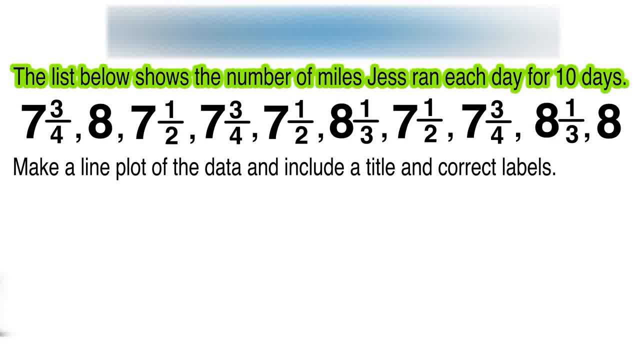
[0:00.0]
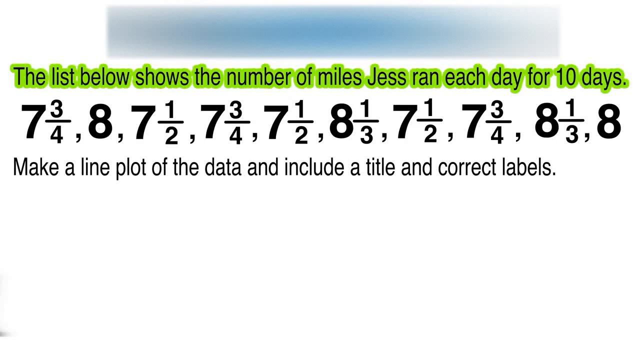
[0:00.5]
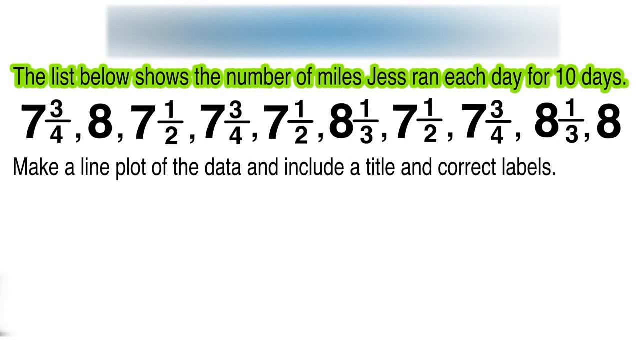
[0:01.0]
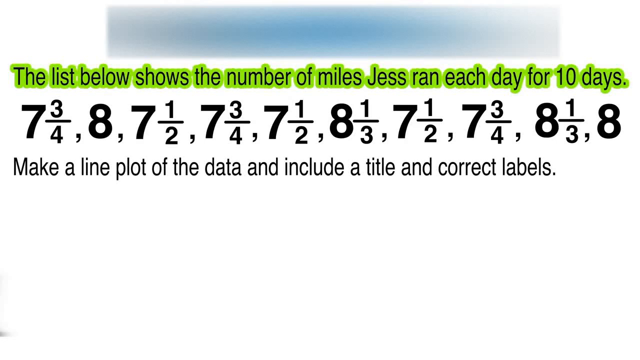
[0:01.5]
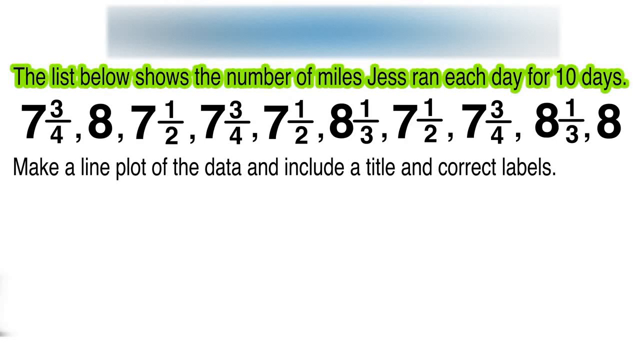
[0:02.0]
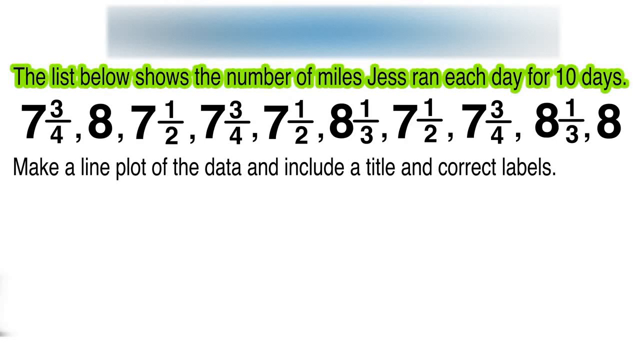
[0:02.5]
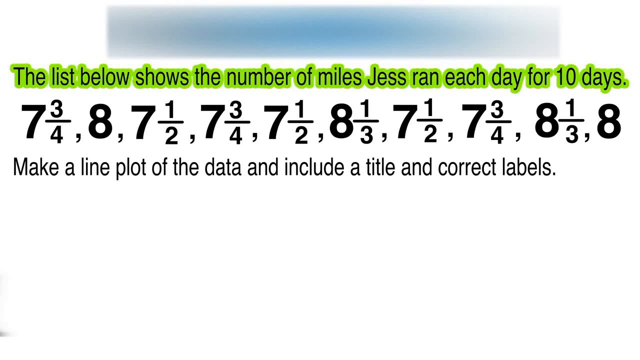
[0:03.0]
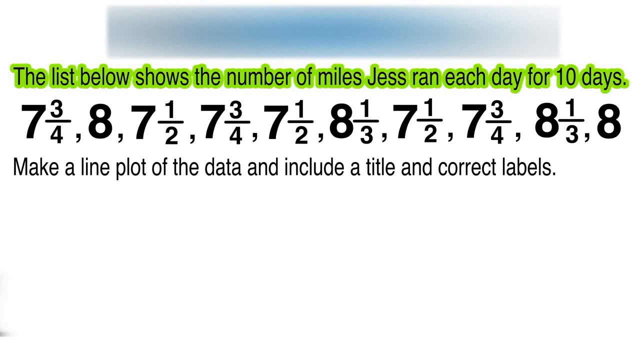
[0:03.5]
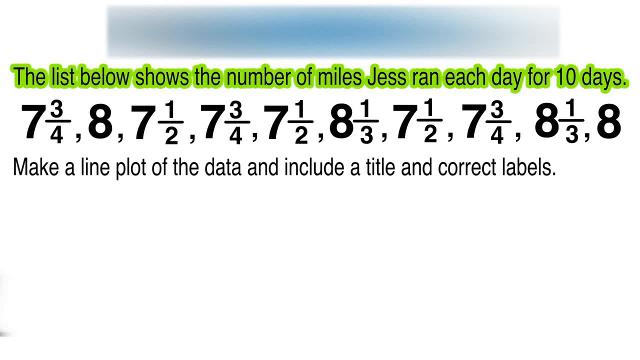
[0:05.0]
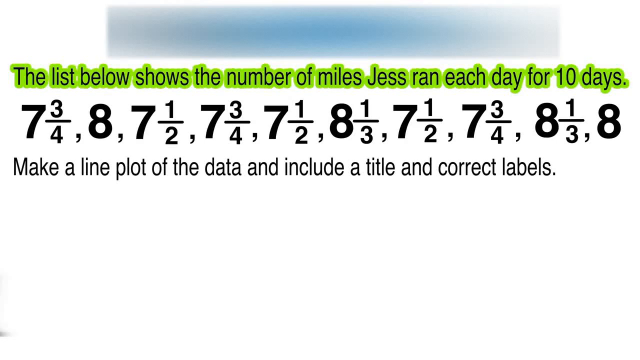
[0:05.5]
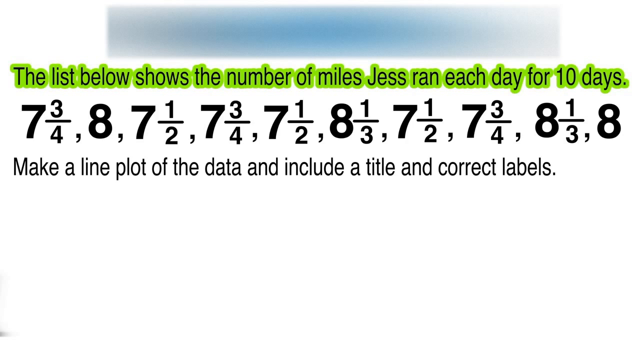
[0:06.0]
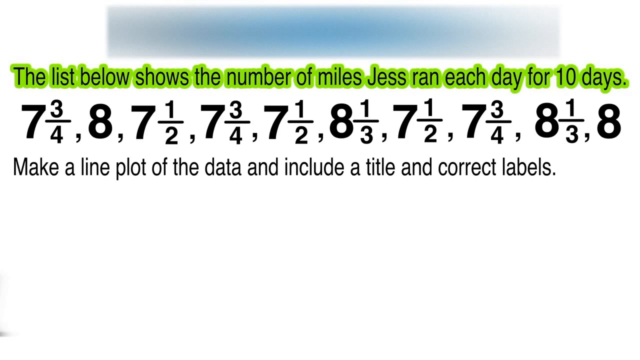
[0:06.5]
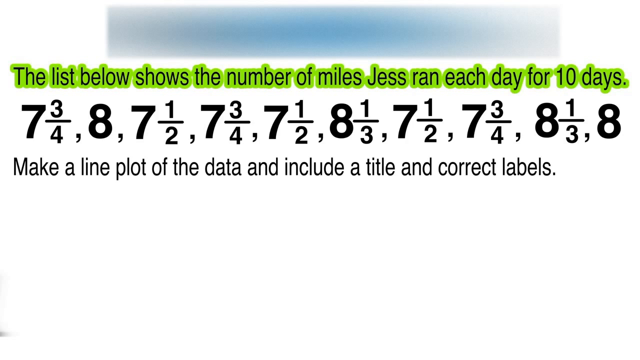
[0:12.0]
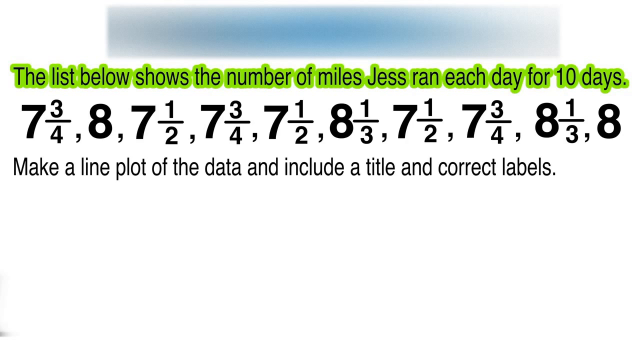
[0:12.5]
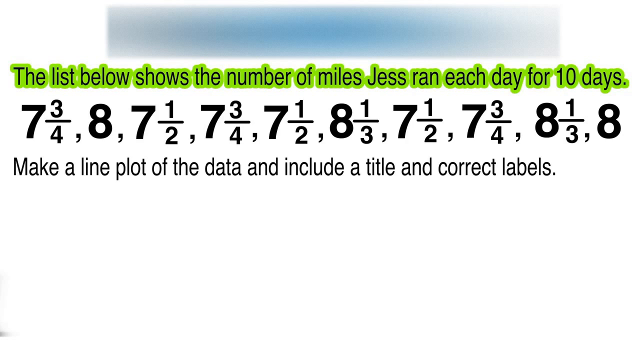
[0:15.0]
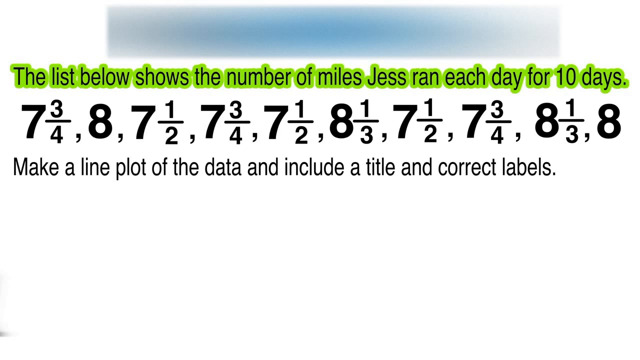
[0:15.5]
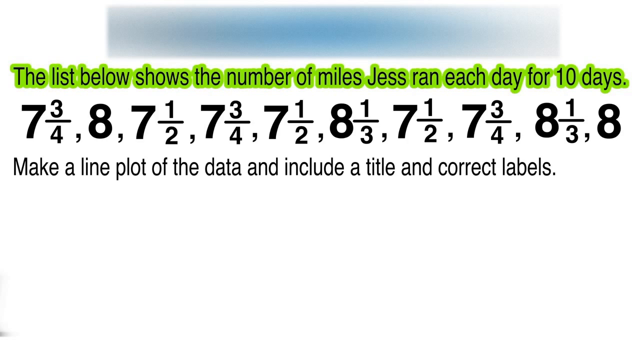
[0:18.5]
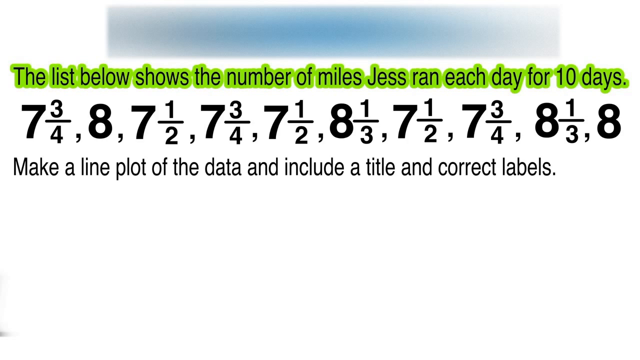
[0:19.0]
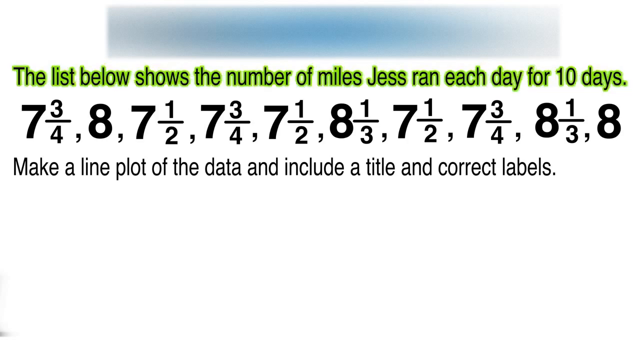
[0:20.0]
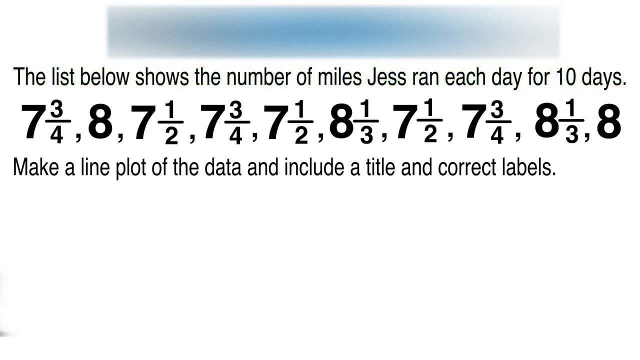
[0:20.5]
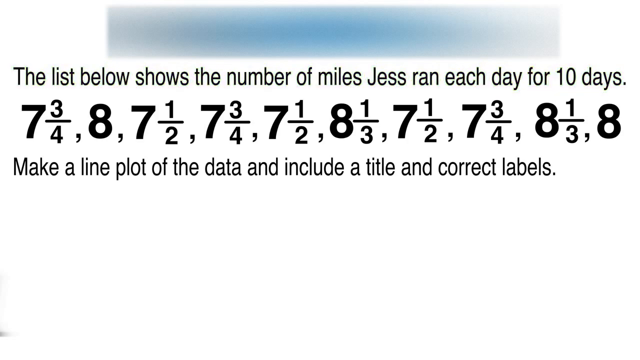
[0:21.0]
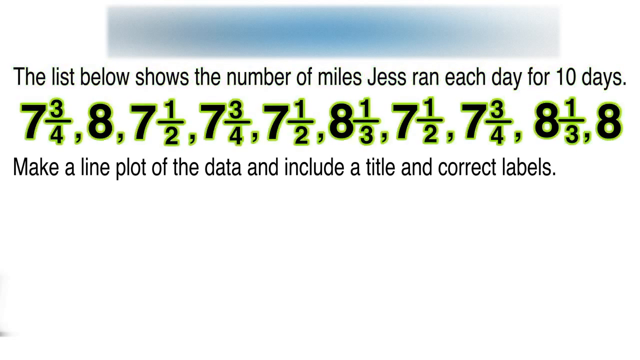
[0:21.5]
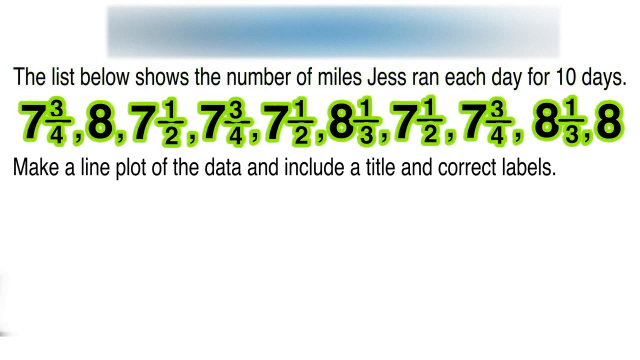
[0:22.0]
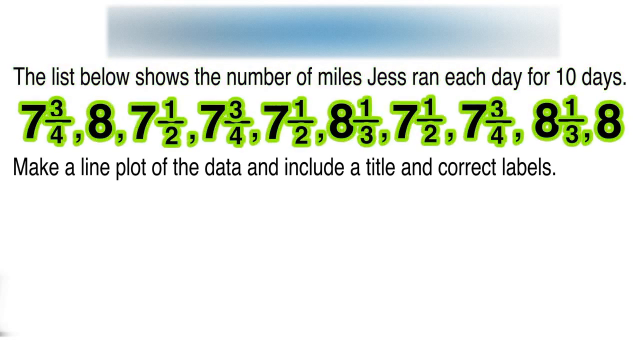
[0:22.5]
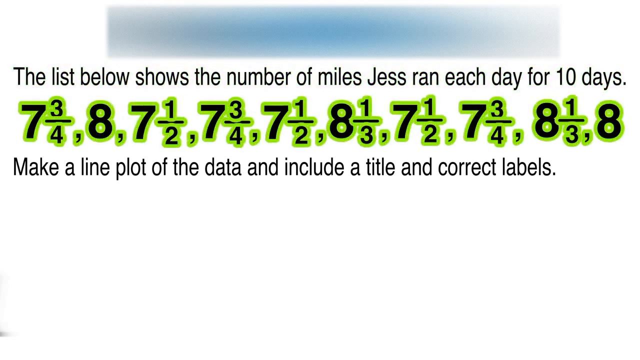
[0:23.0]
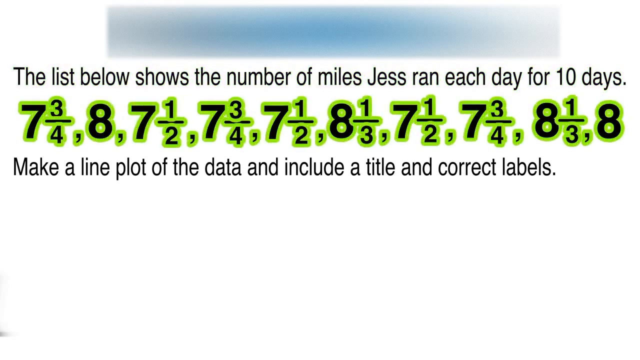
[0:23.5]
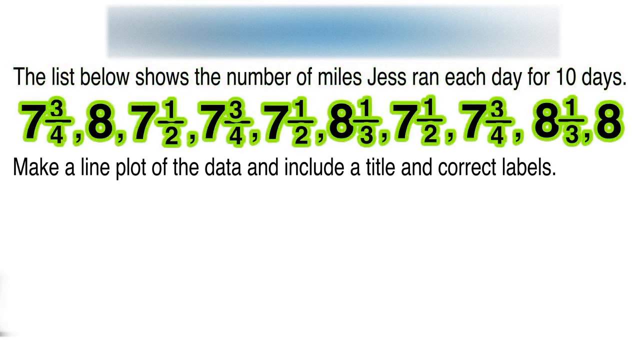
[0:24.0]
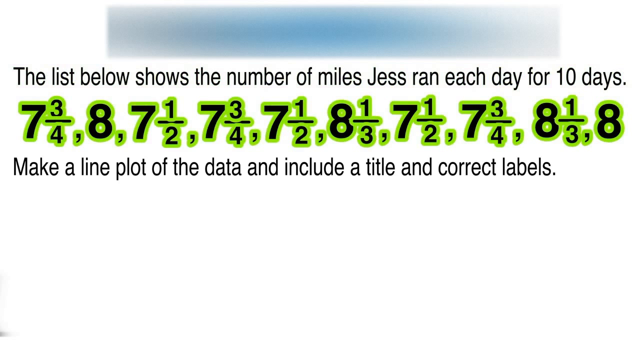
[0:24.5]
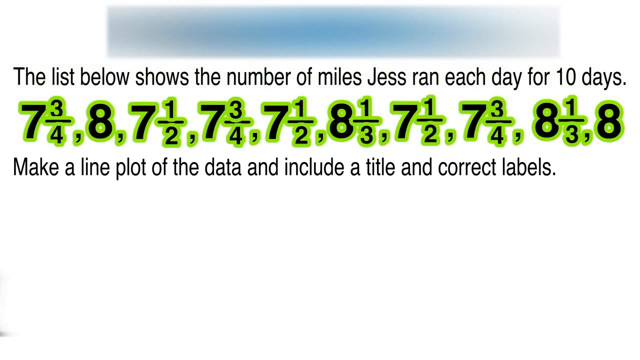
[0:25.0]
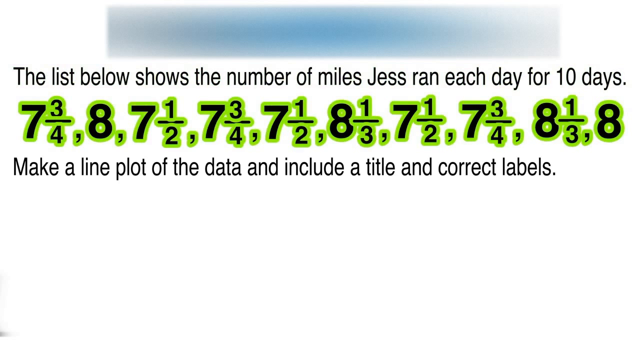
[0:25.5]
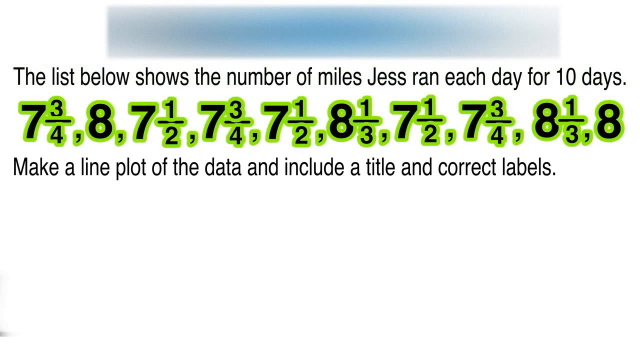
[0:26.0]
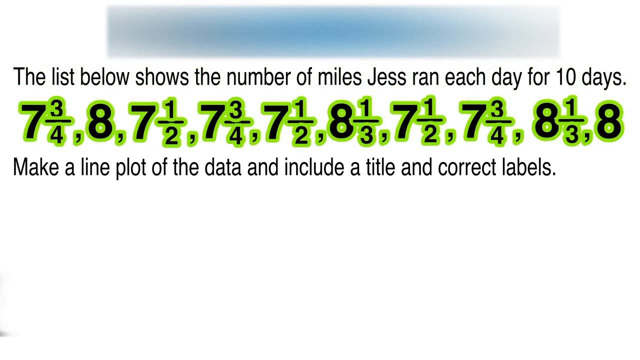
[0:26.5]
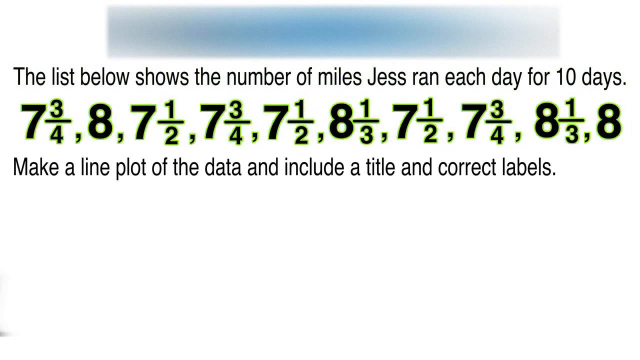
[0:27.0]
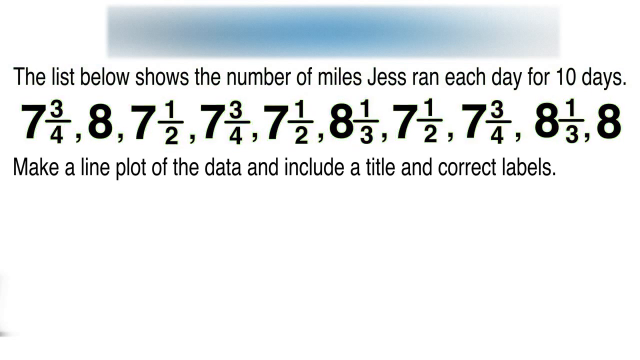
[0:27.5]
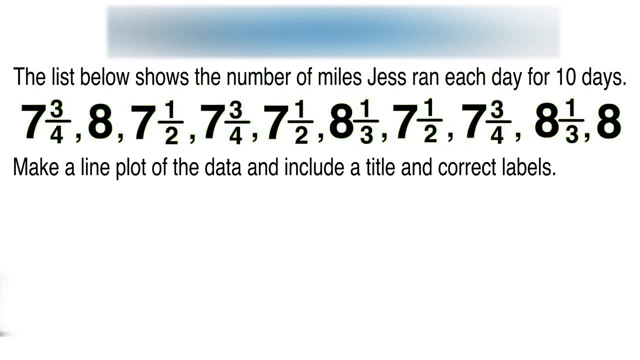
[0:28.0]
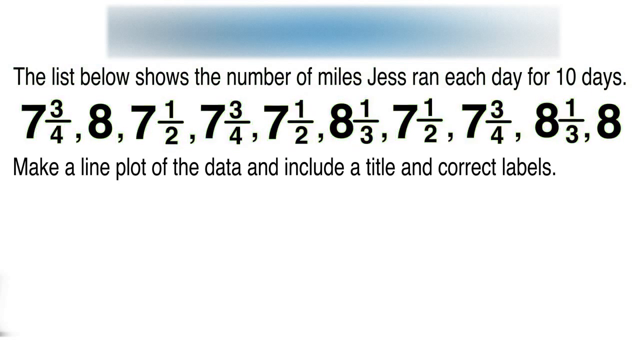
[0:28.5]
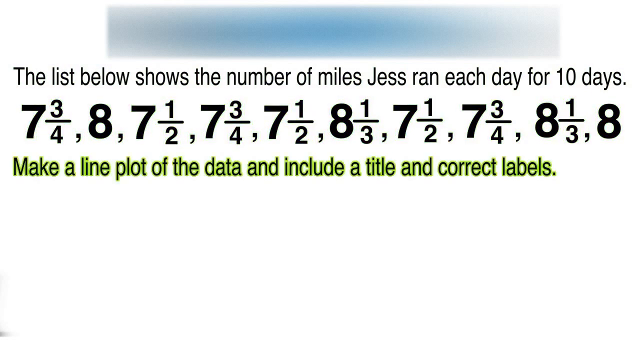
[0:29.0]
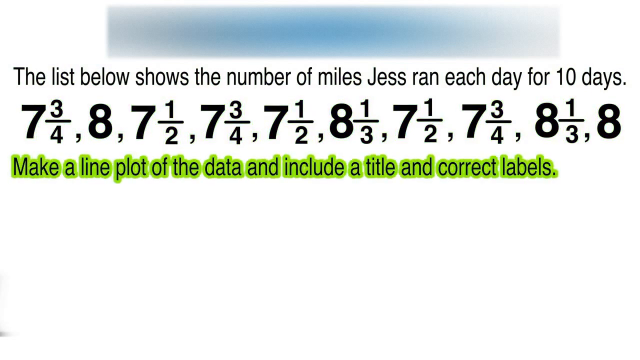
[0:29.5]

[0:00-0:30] A math problem tutorial appears on a white background. The first line of text is black, with a green glow on each letter, and reads: "The list below shows the number of miles Jess ran each day for 10 days." The glow then disappears from the first line and moves to the second line, which is a series of numbers: 7 3/4, 8, 7 1/2, 7 3/4, 7 1/2, 8 1/3, 7 1/2, 7 3/4, 8 1/3, and 8. The green glow then moves to the last line, which reads: "make a line plot of the data and include a title and correct labels."